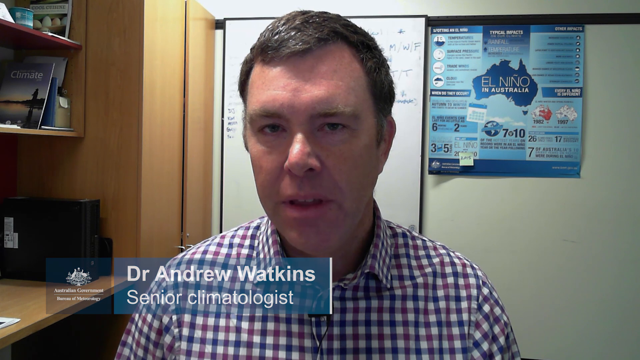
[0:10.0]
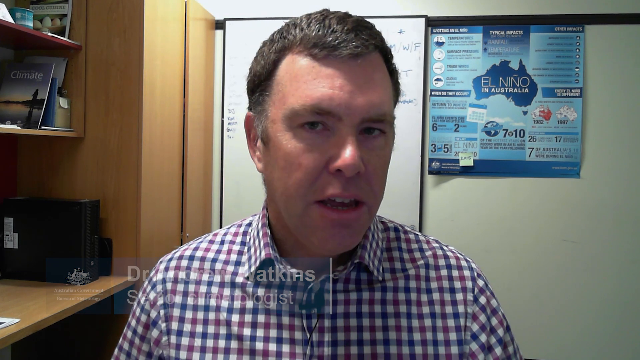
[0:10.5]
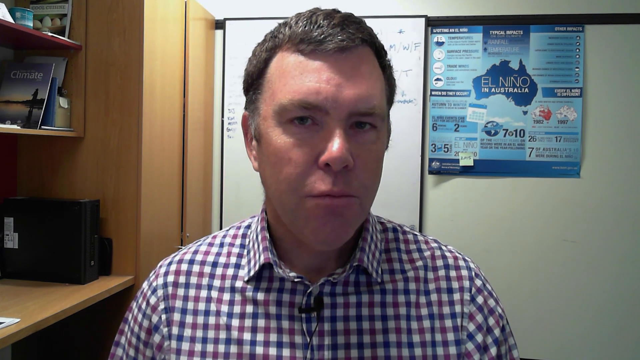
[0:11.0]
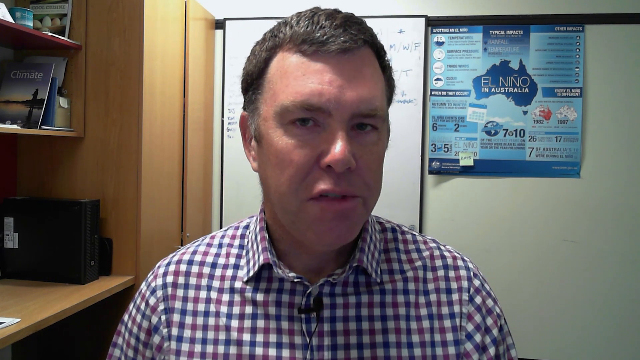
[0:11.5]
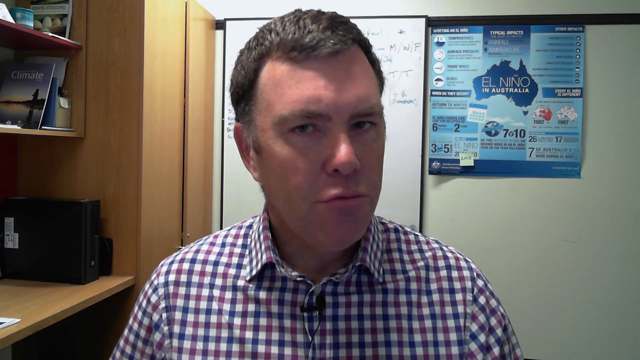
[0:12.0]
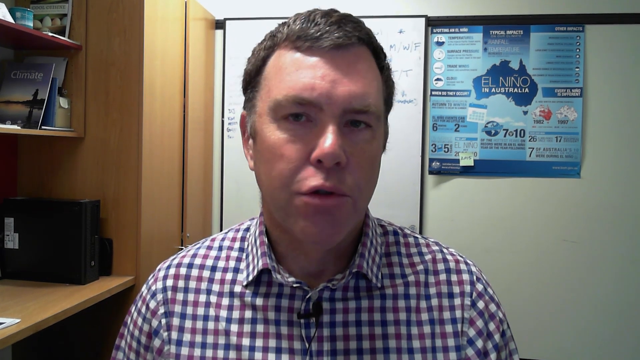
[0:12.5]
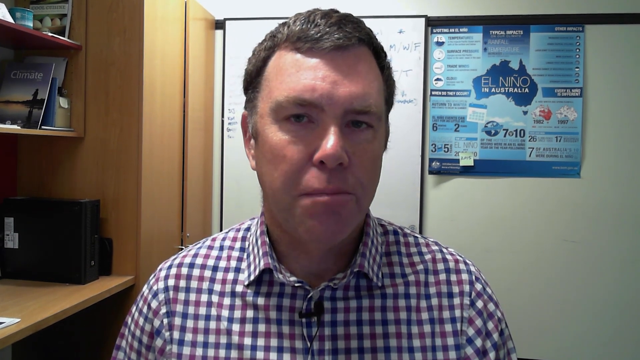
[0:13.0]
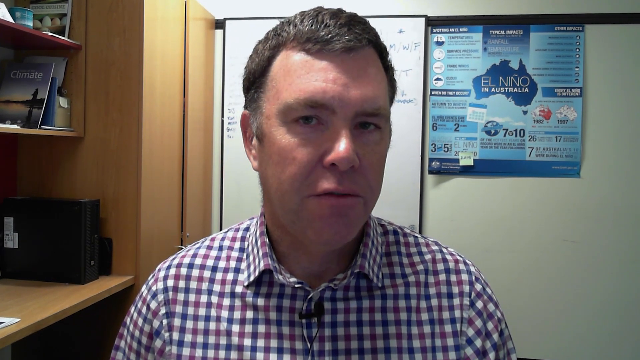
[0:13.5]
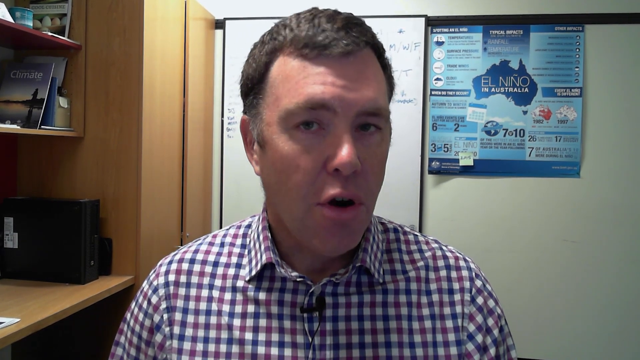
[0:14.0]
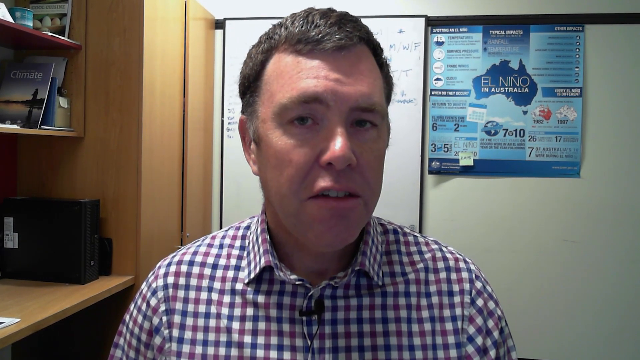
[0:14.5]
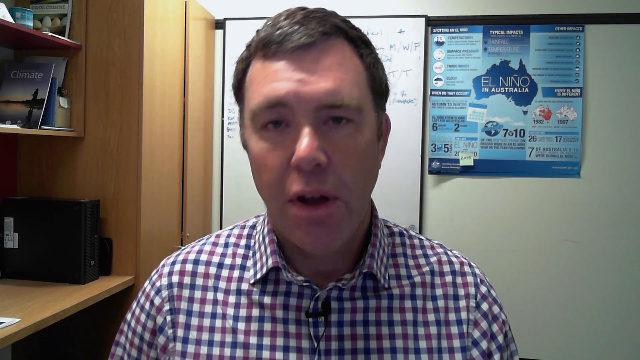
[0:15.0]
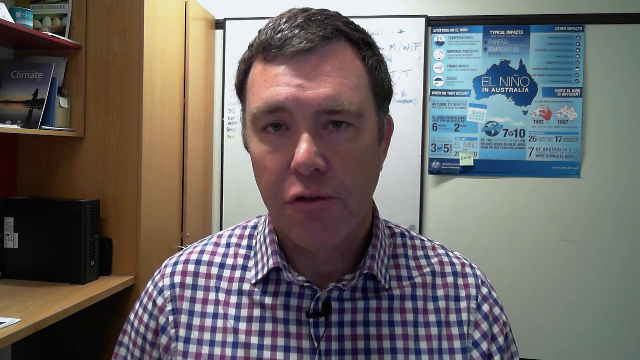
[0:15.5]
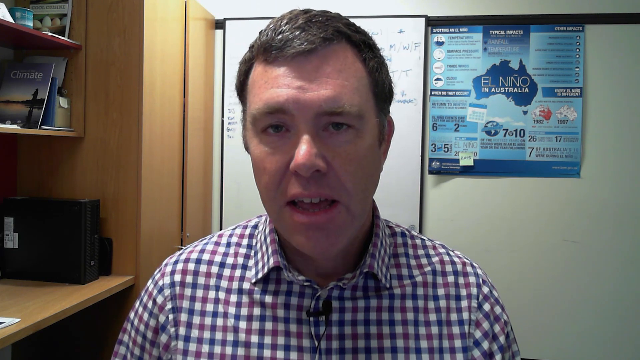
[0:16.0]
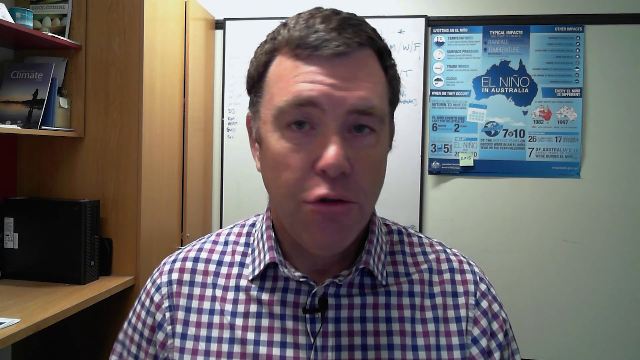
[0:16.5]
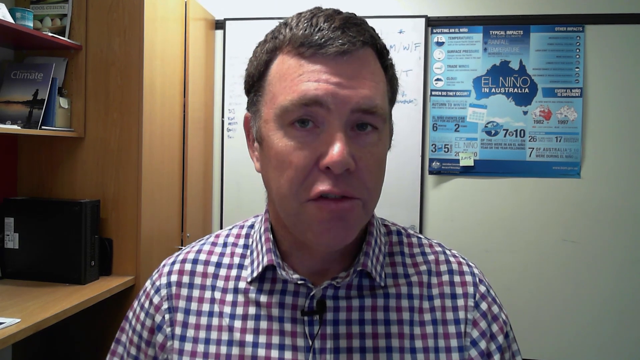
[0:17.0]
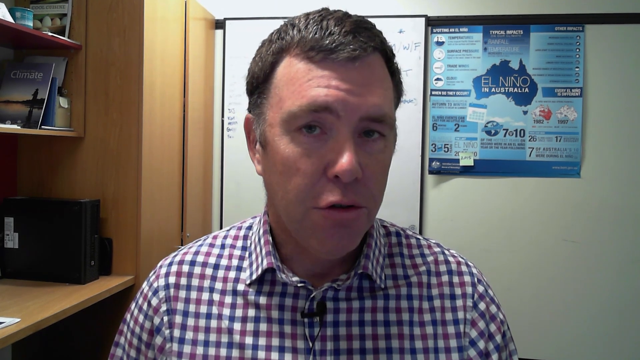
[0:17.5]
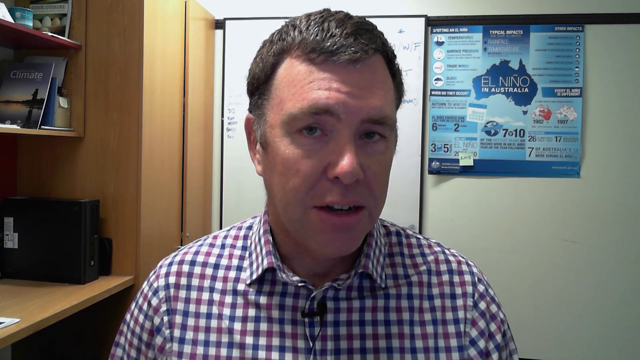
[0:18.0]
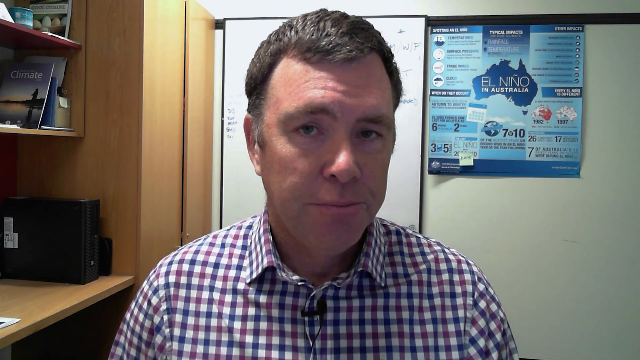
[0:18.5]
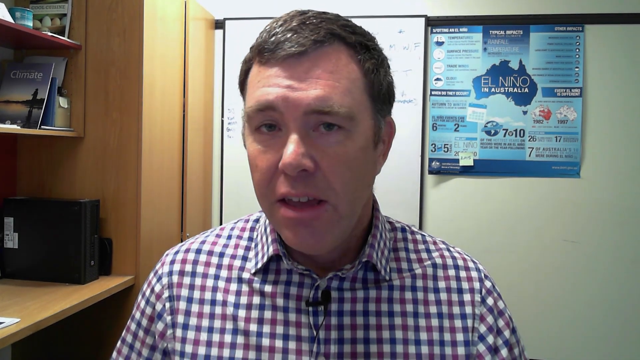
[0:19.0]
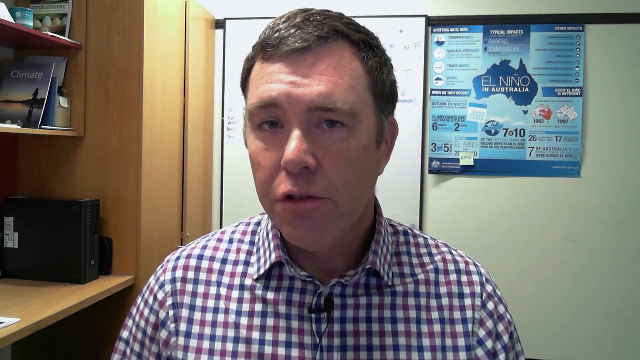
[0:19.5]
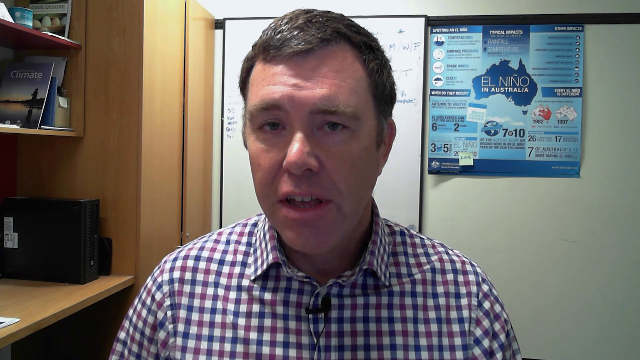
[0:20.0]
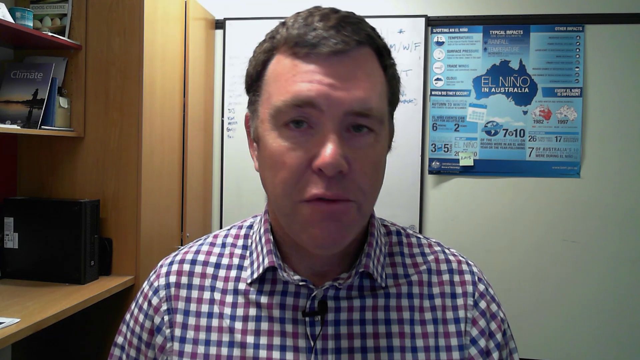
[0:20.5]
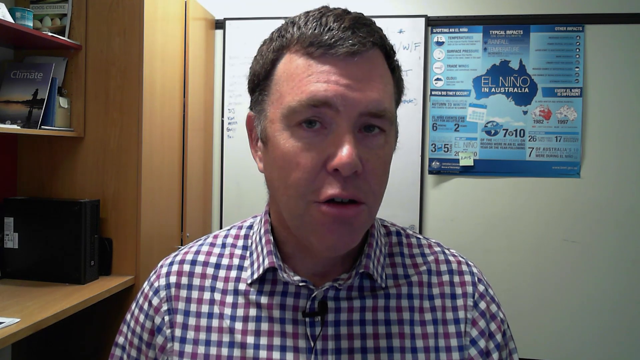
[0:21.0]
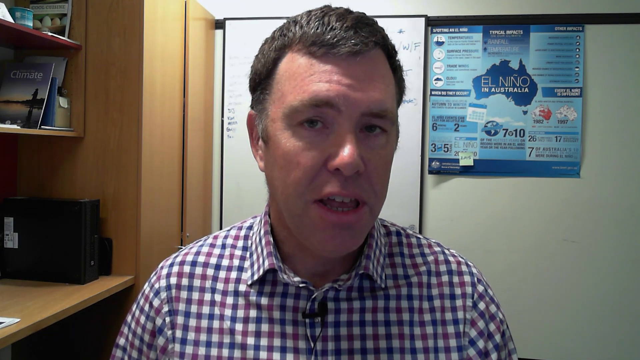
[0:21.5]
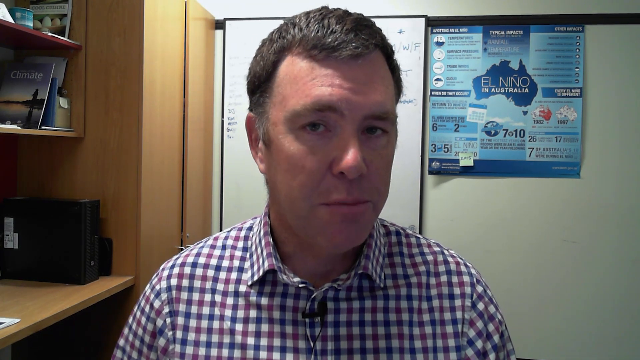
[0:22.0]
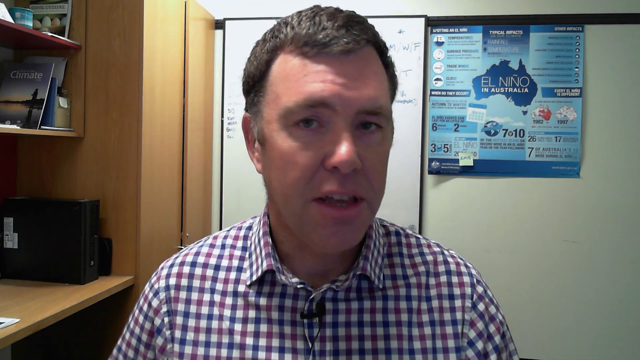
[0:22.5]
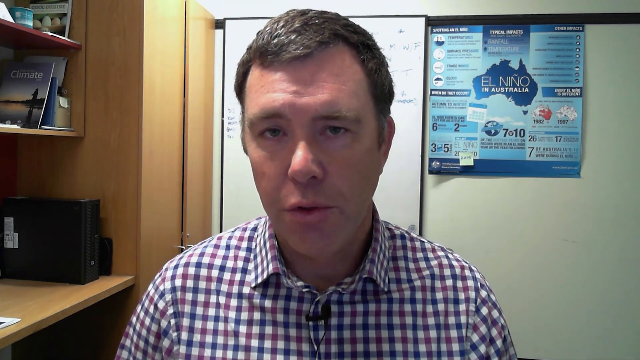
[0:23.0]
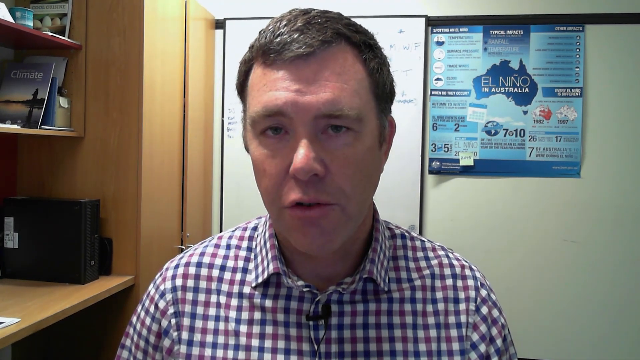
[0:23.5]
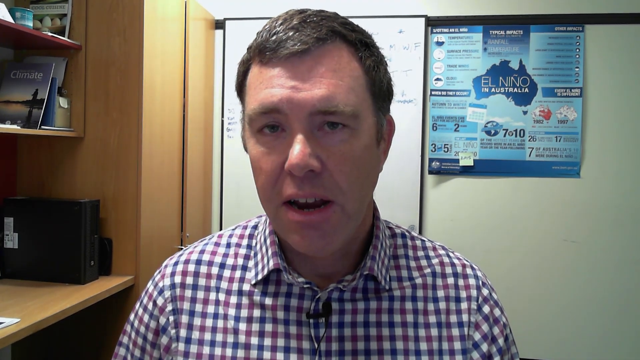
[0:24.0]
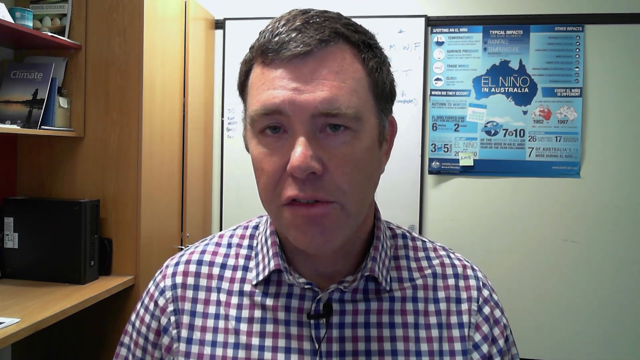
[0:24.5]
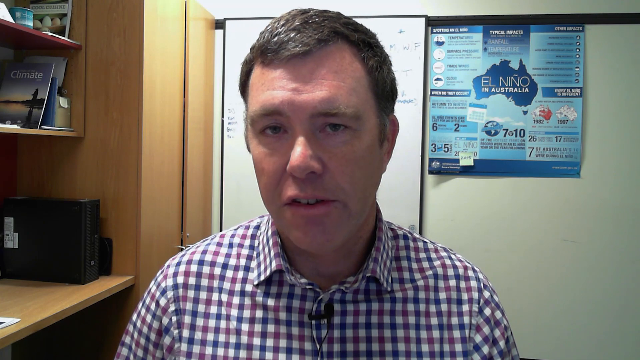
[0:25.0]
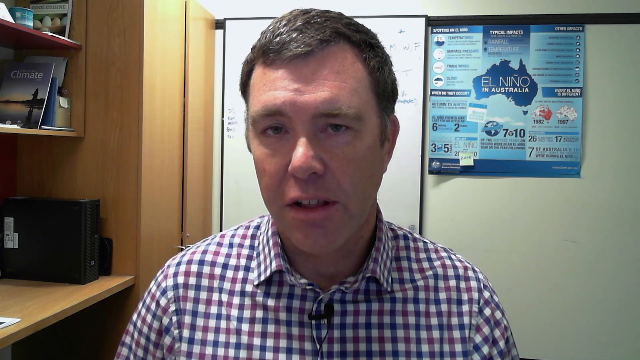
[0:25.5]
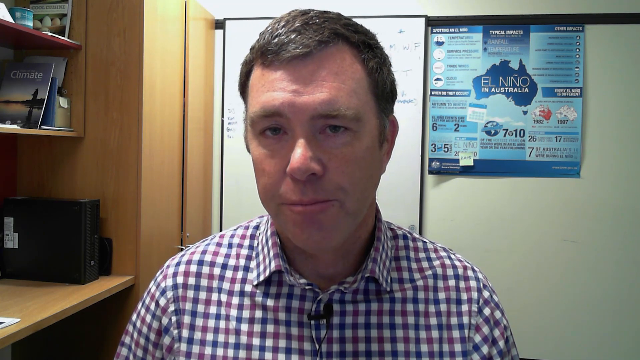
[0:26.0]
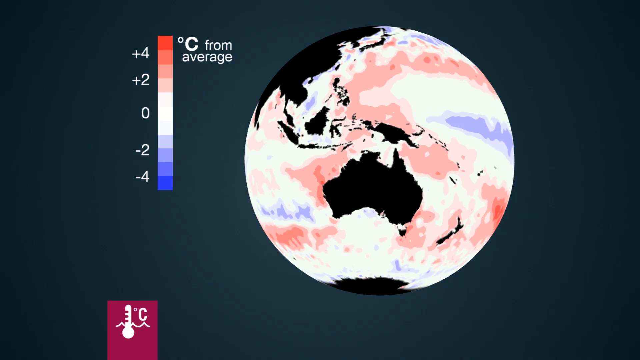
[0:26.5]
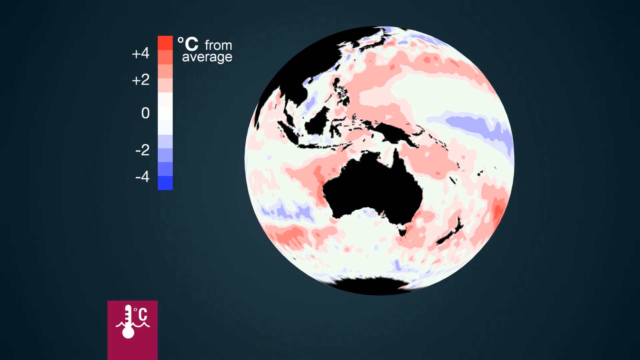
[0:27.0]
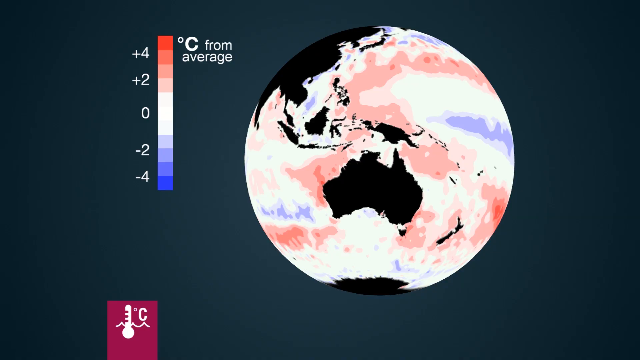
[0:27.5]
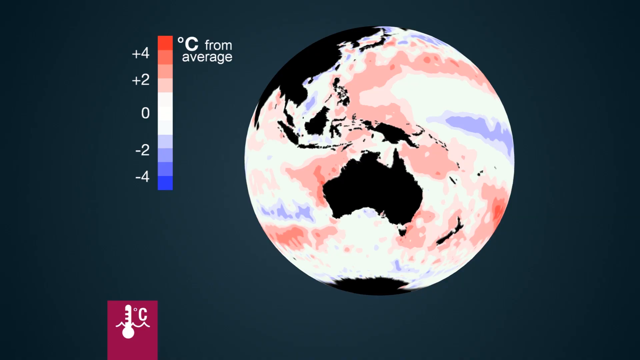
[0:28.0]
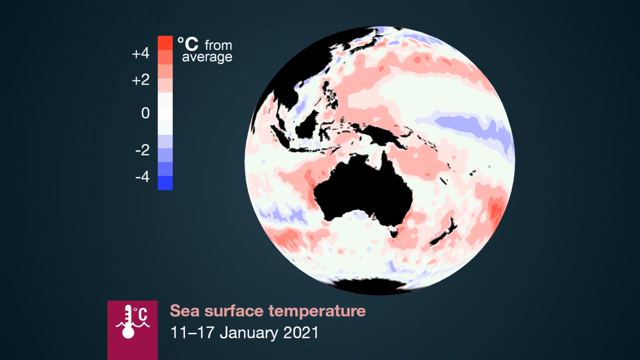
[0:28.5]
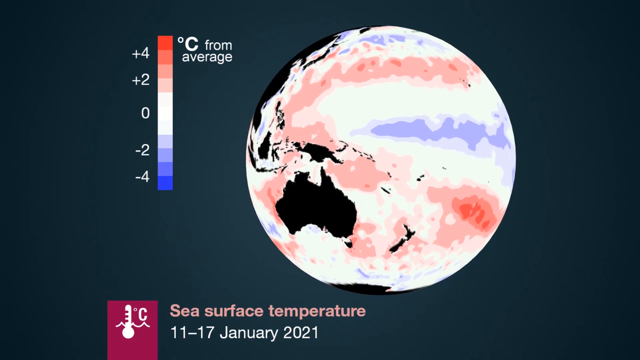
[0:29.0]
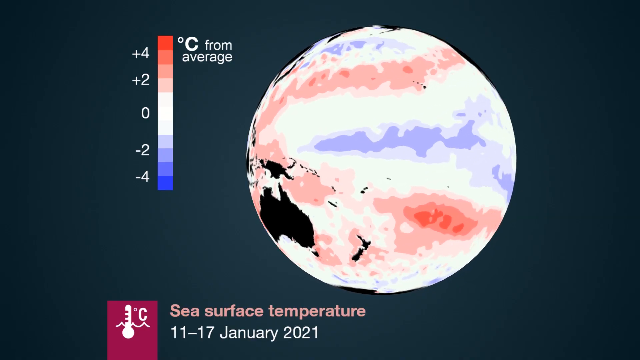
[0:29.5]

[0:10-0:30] Dr. Andrew Watkins, a senior climatologist, speaks to the camera in his office. Behind him, a poster attached to the wall reads "El Nino in Australia" and carries various information about climate change. He has a small microphone attached to his shirt, wears a blue, white and purple checked shirt, and has relatively short hair. The video then transitions to a world map focused on Australia showing temperature averages, with different areas of the world coloured differently depending on temperature. Some areas around Australia are starting to show orange, while areas further north and west are more blue, indicating cooler temperatures. As the globe rotates, the temperature colourations vary.